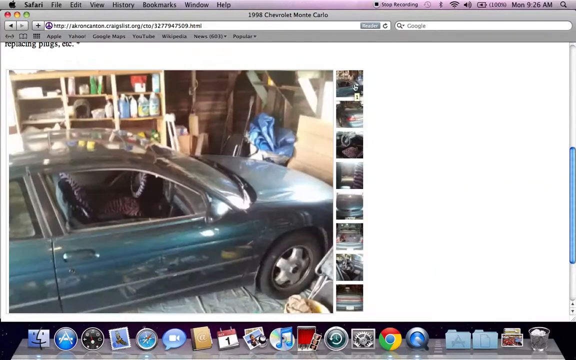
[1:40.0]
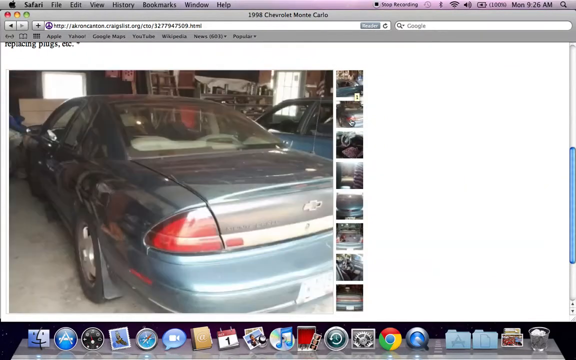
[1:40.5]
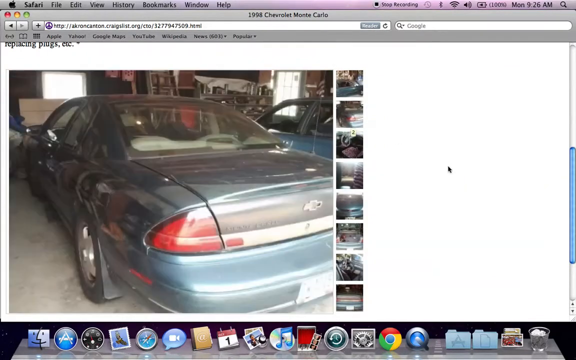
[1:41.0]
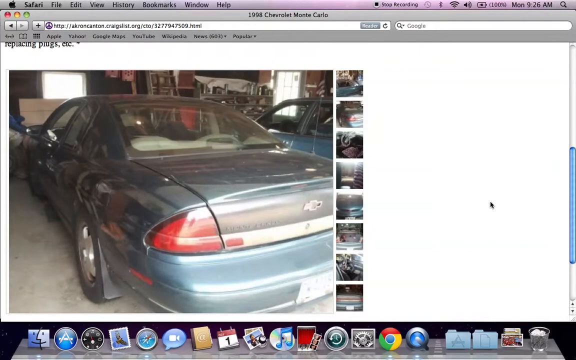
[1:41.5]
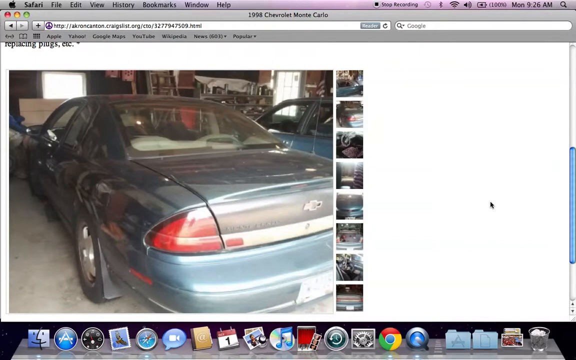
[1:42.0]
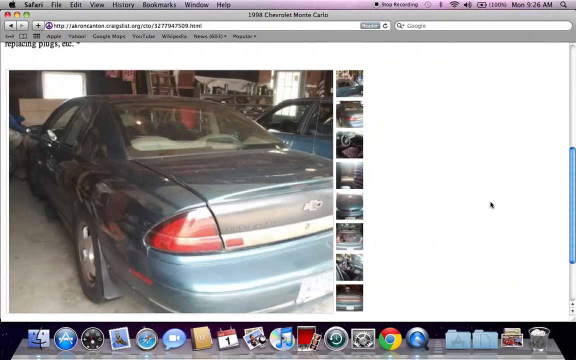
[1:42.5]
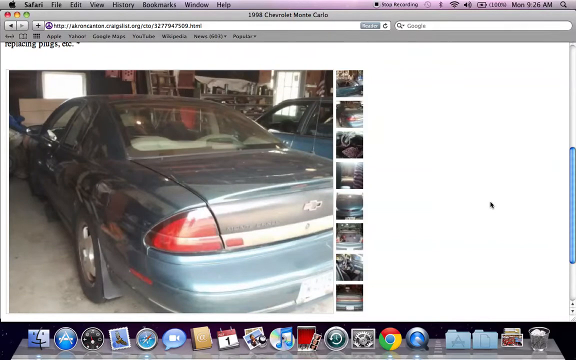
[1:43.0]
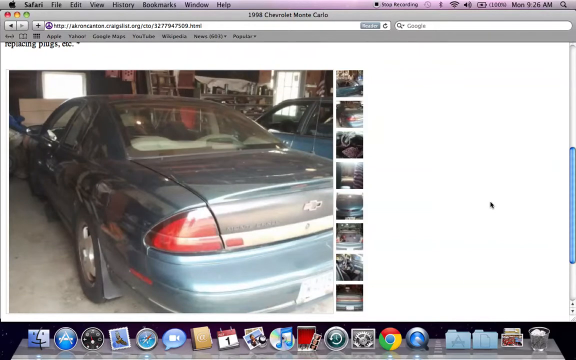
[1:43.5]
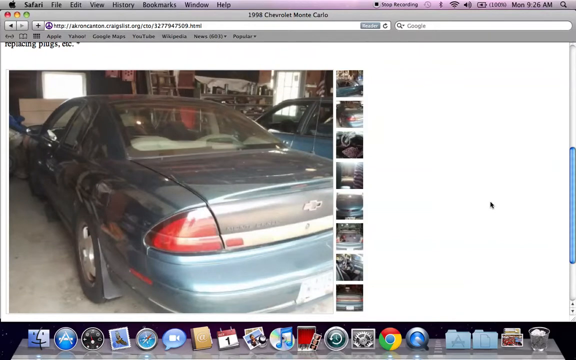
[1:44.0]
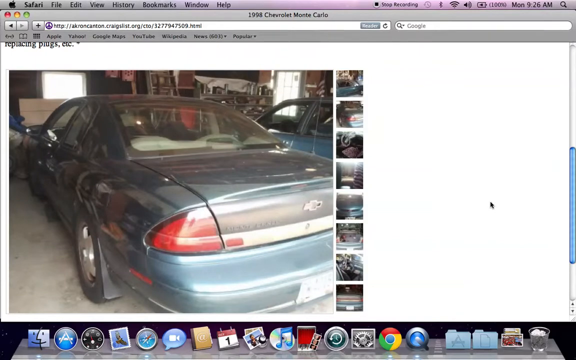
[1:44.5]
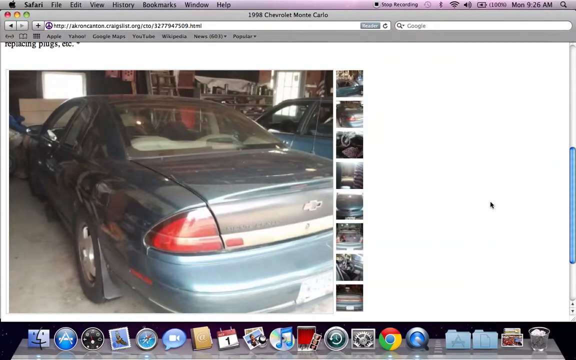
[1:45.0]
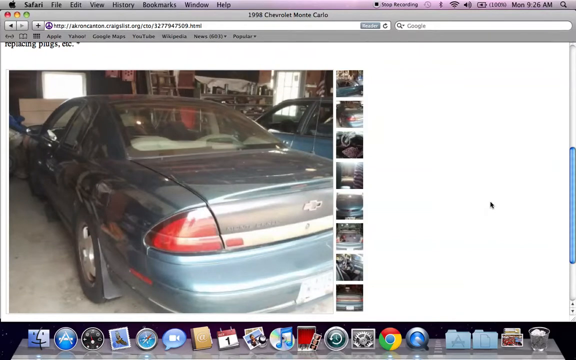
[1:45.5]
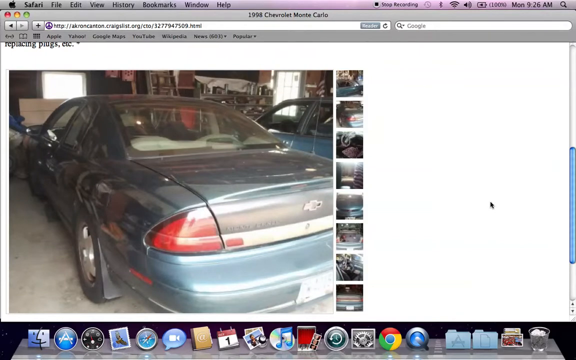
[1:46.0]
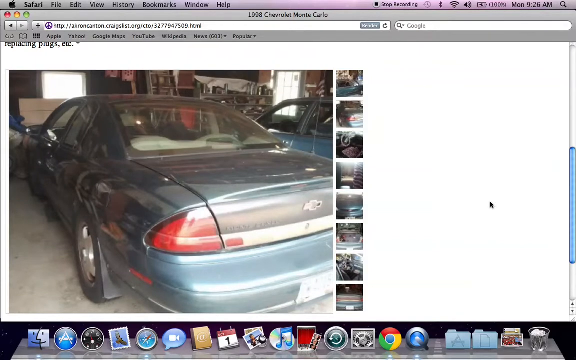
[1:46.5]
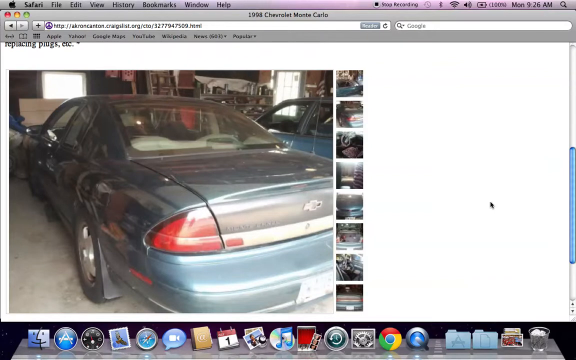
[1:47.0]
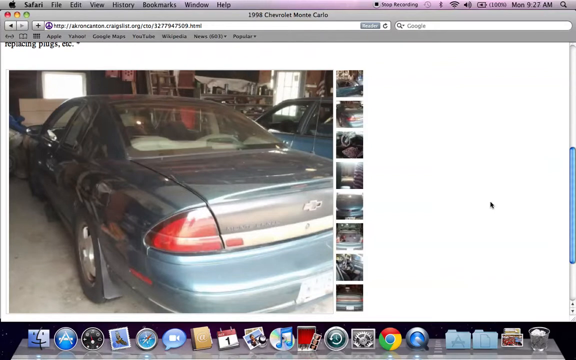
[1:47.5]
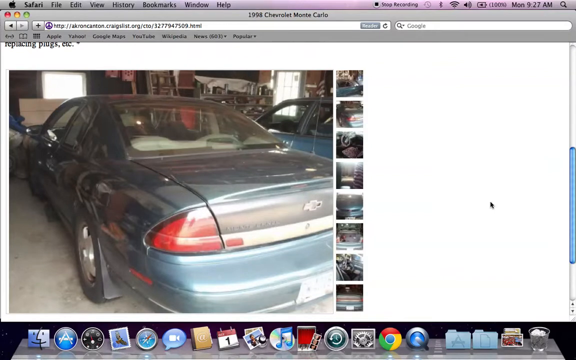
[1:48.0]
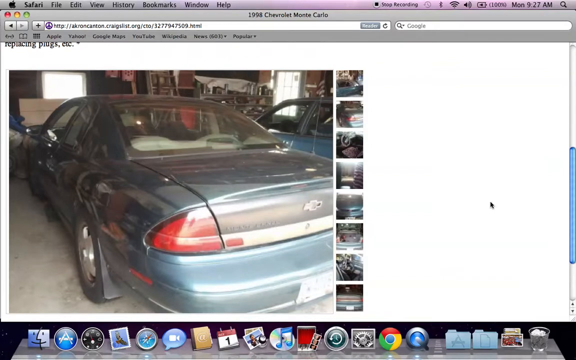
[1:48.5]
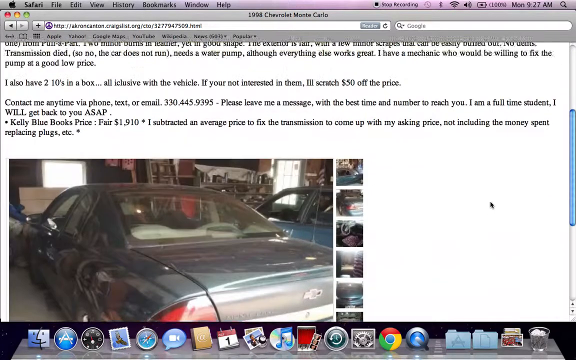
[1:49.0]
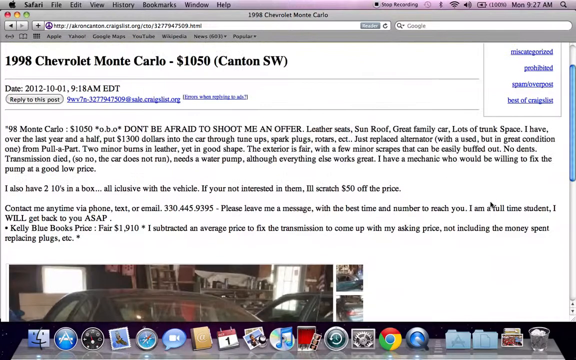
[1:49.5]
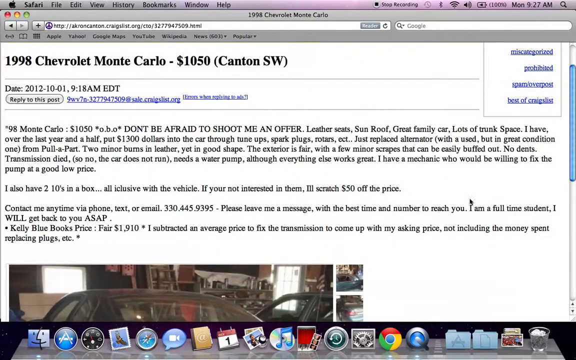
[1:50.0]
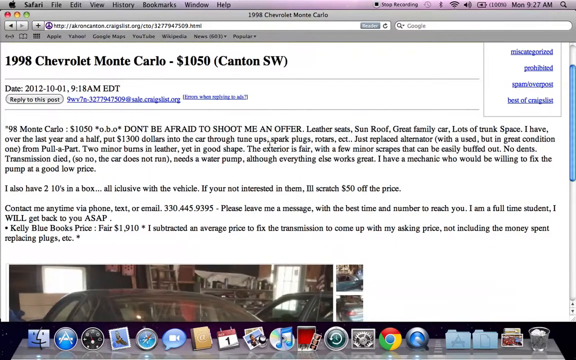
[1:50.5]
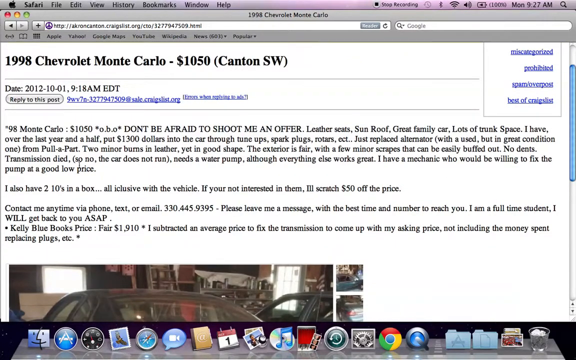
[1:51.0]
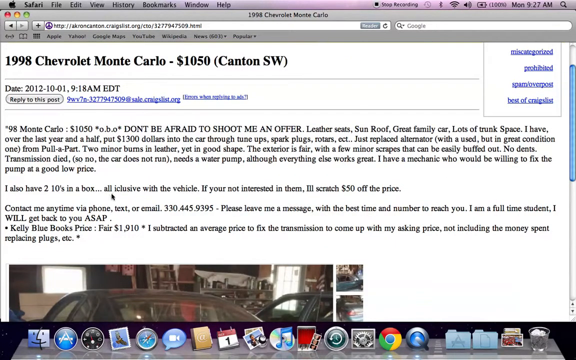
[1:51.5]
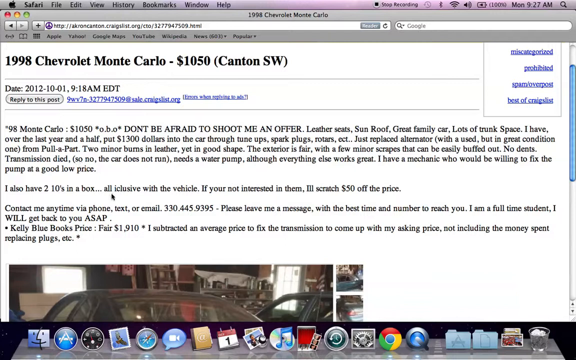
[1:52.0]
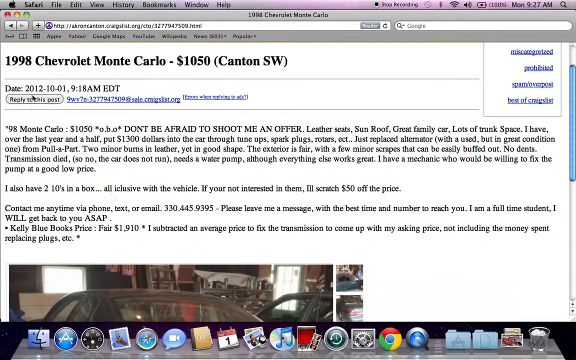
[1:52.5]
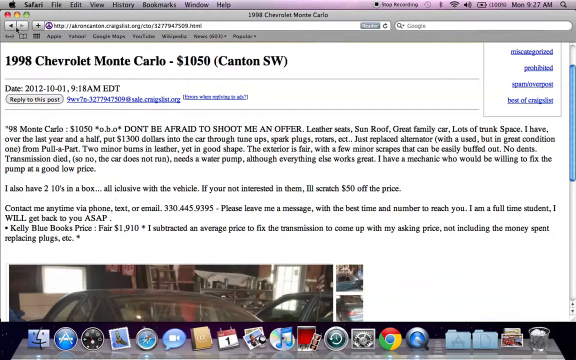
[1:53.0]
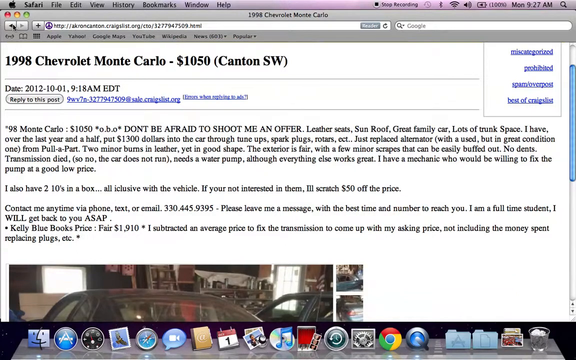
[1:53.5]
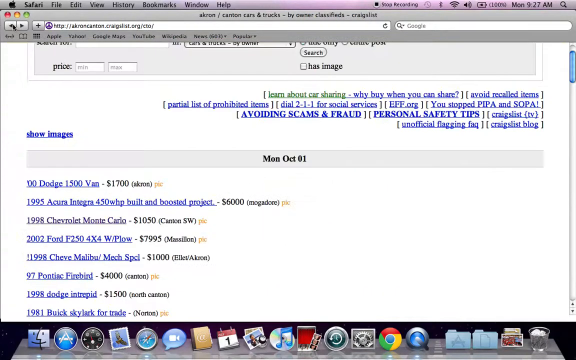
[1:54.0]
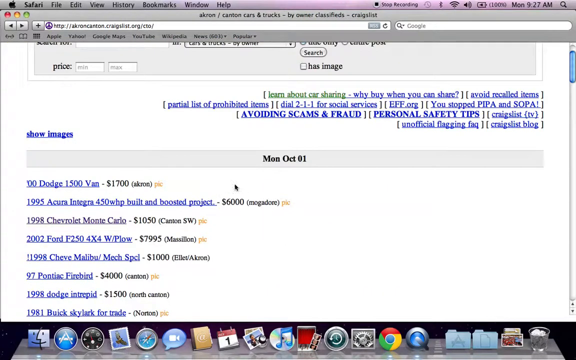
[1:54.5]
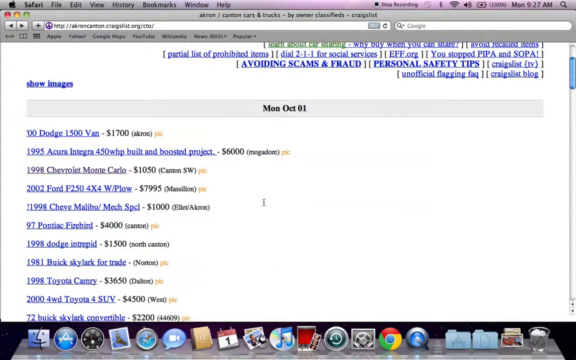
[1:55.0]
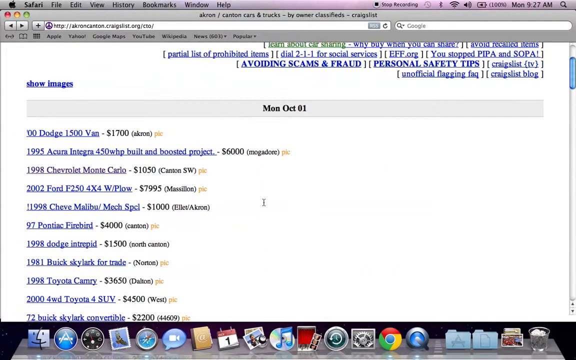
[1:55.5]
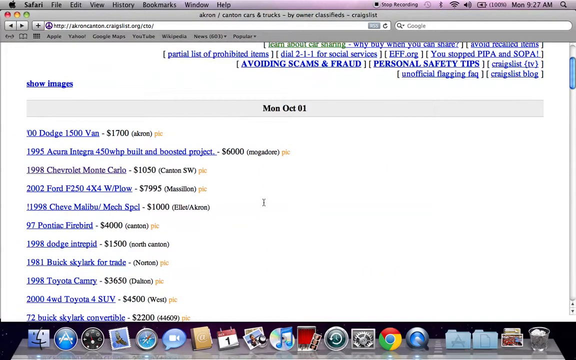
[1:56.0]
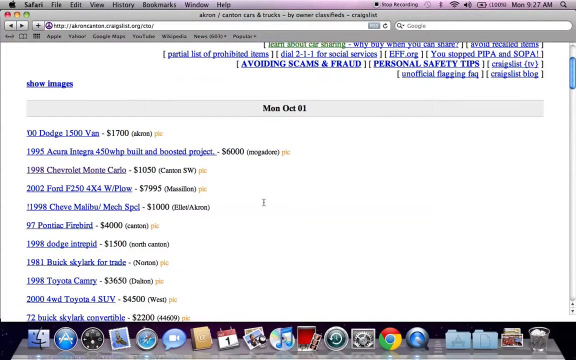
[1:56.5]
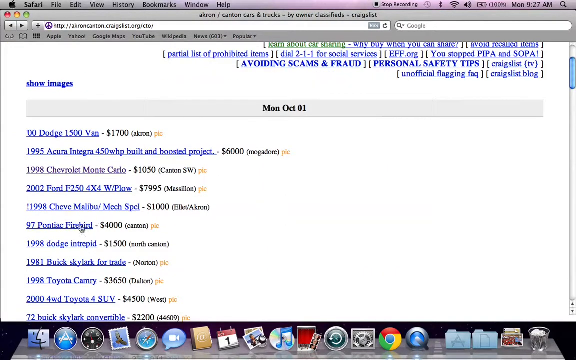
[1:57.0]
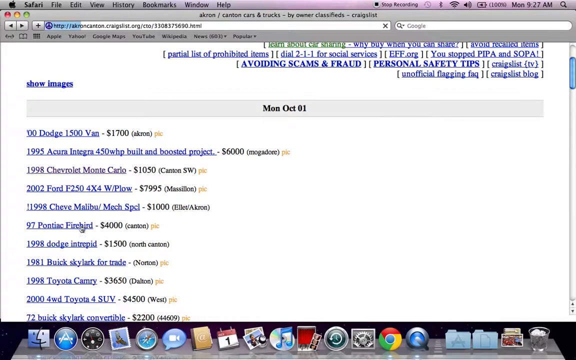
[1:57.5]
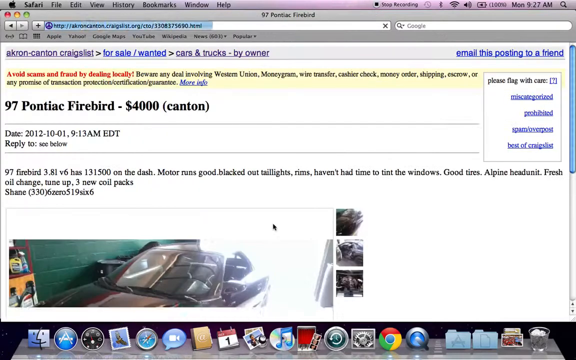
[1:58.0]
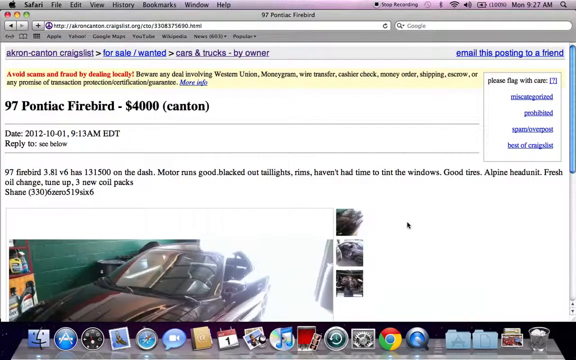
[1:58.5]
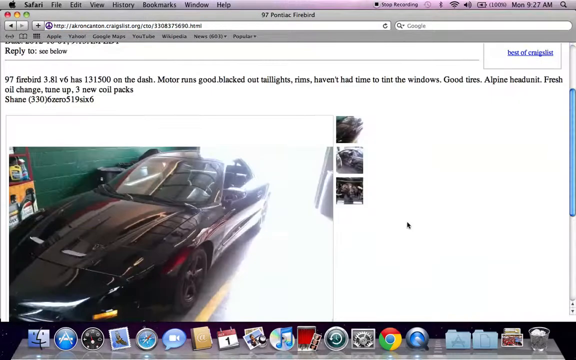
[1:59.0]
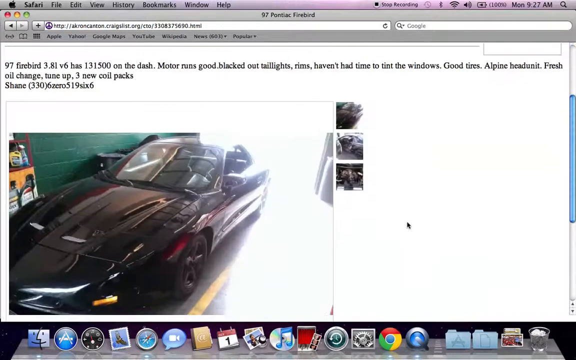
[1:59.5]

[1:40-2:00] Pictures show the car from different angles: first from the driver's side back, then a quick image of the hood, in whose reflection what looks like a four-story, run-down, junky-looking apartment building is visible behind the car. Next, most likely with the driver's door opened, the front seat appears, covered in pink and black zebra print, as is the steering wheel. Then another view of the trunk, back to the zebra print, and a quick picture from the passenger side. A picture of the opened trunk shows a red funnel on the left-hand side. The pictures switch very quickly. A picture of the middle of the back seat, as if taken from between the driver's and passenger seats, is a little blurry, with a lot of diffused sunlight coming in through the rear window. Then the side of the car, very scratched, is shown, followed again by the first image of the driver's side rear. The page is scrolled back up to the listing, the mouse moves around it, and the back button is clicked, returning to the page listing different cars. The "97 Pontiac Firebird" is clicked and its listing opens, with bold black type at the top reading "97 Pontiac Firebird $4000" and "(Canton)" in parentheses, and just a very small description. A picture is opened, and the first one looks like a very shiny black sports car; then the view quickly switches to show the older car looked at before.